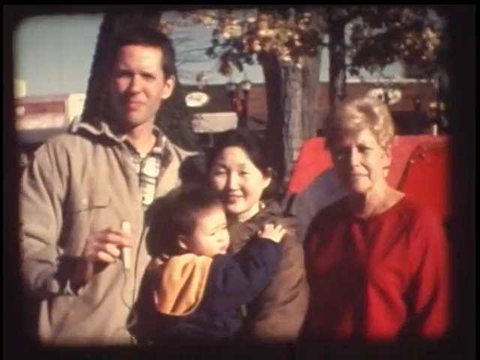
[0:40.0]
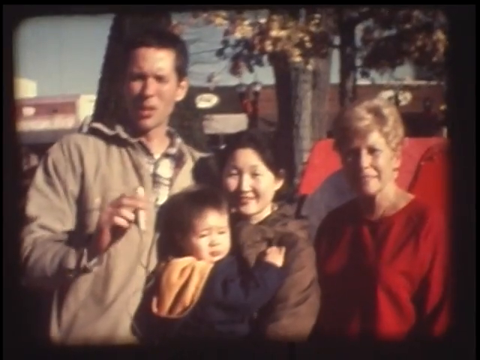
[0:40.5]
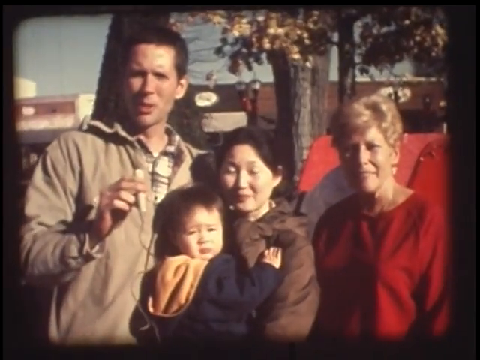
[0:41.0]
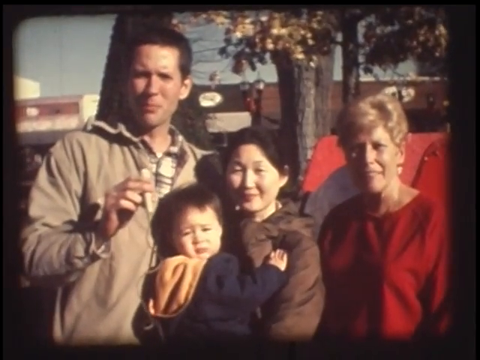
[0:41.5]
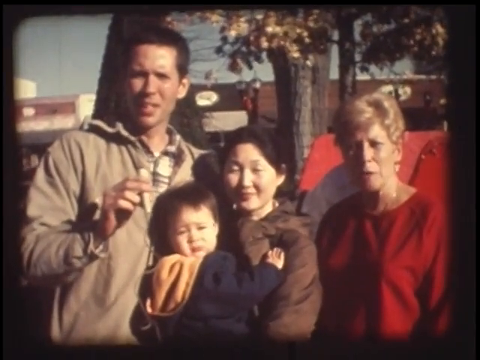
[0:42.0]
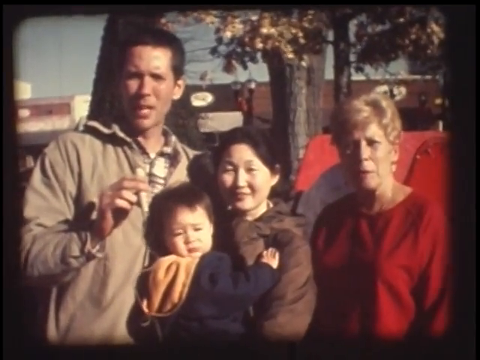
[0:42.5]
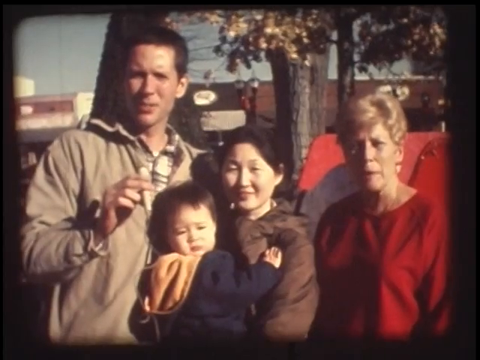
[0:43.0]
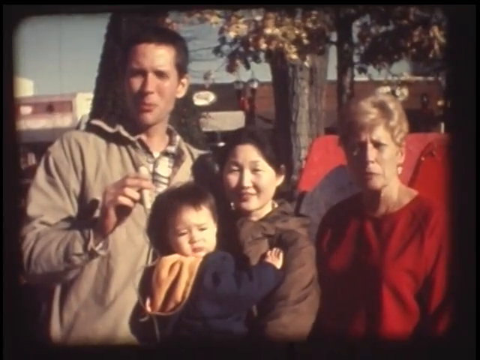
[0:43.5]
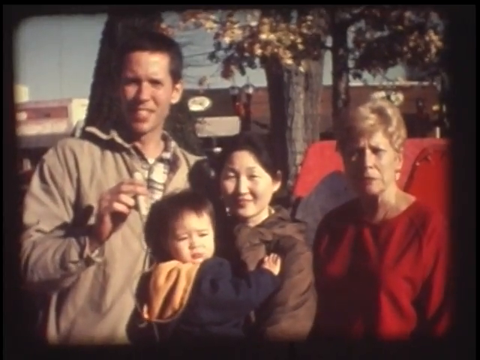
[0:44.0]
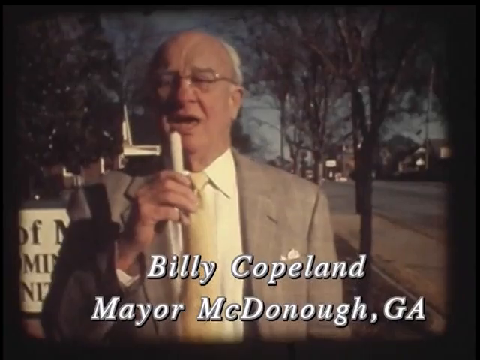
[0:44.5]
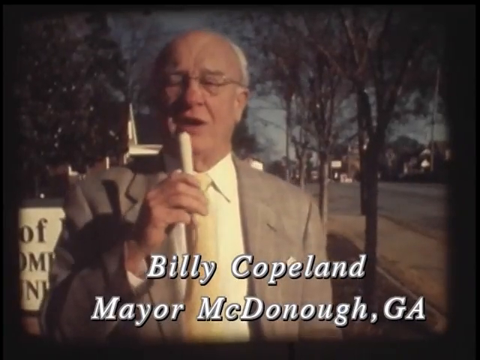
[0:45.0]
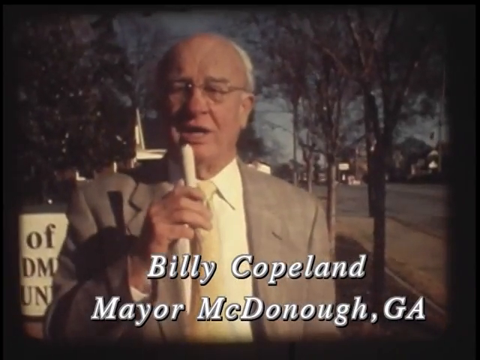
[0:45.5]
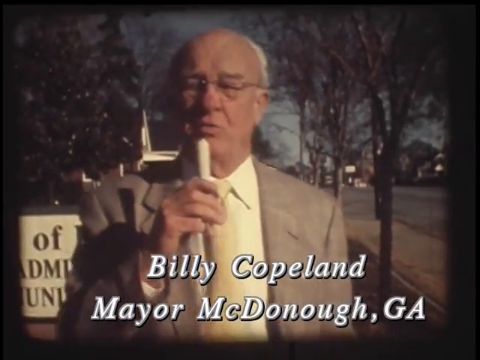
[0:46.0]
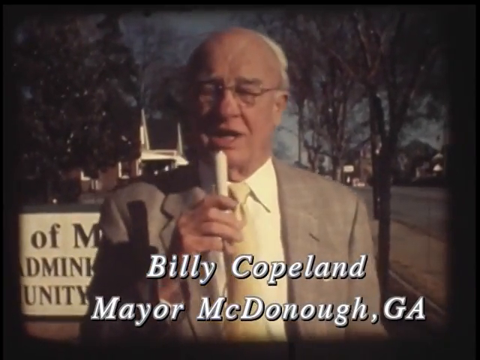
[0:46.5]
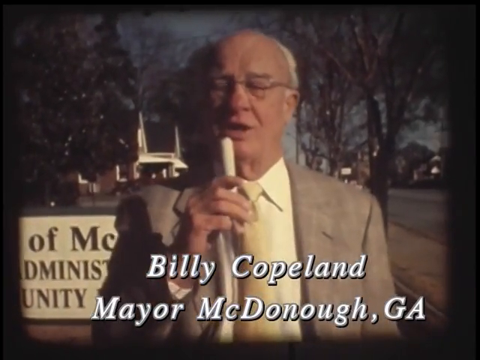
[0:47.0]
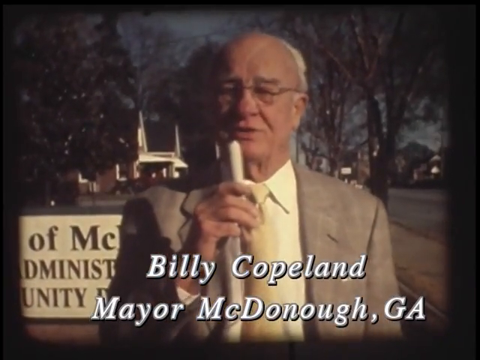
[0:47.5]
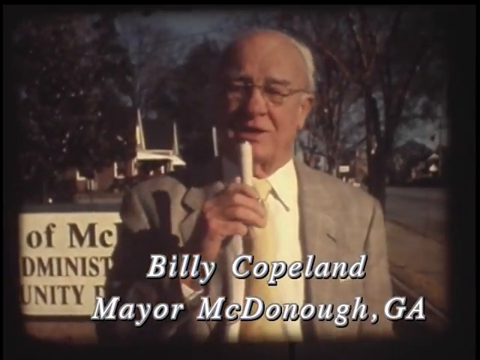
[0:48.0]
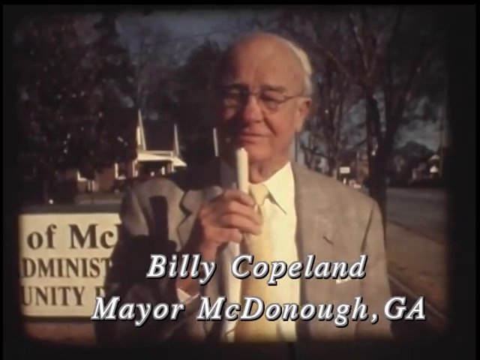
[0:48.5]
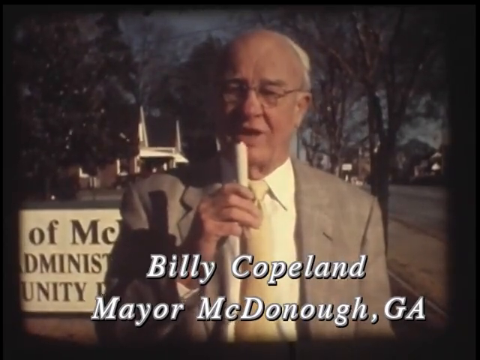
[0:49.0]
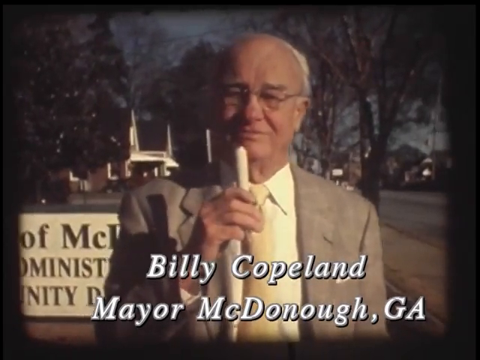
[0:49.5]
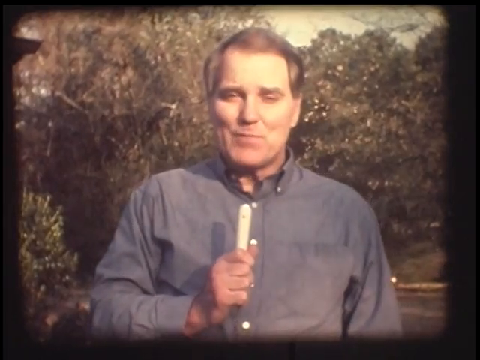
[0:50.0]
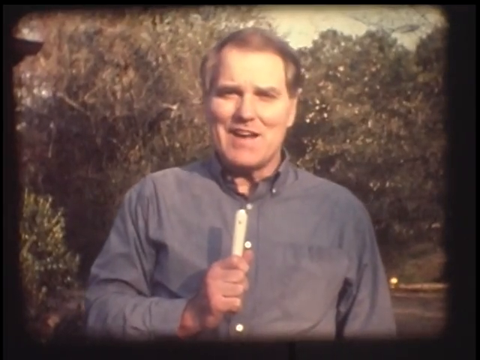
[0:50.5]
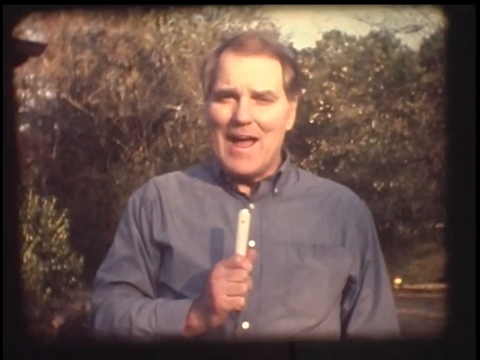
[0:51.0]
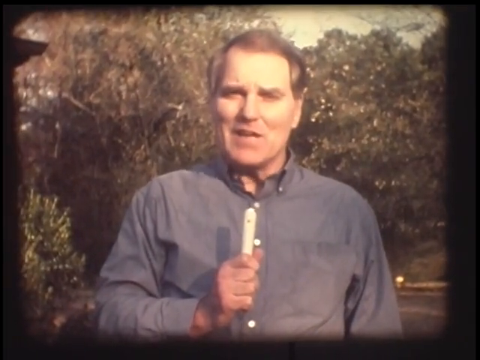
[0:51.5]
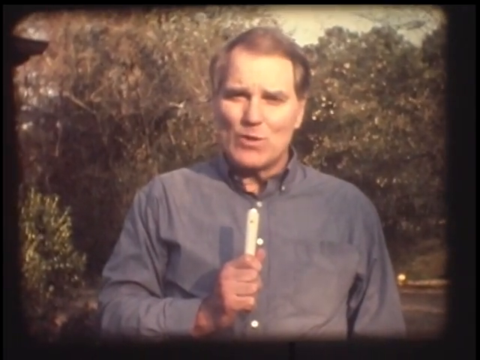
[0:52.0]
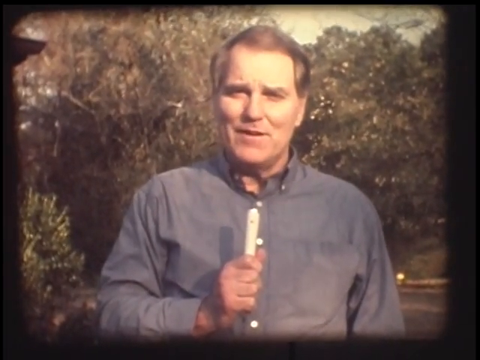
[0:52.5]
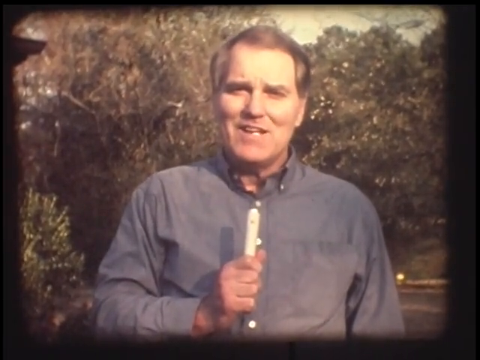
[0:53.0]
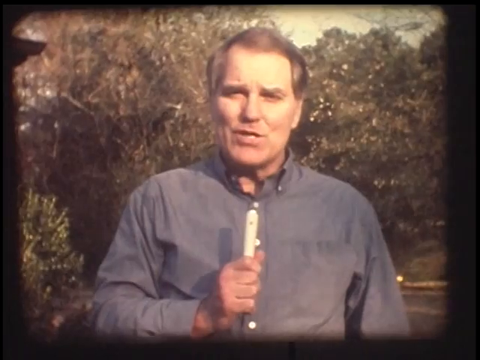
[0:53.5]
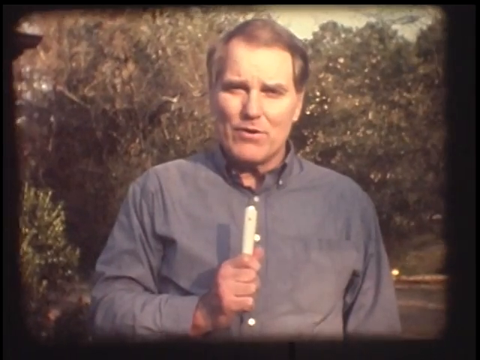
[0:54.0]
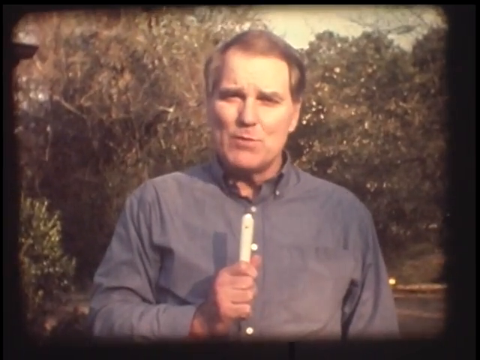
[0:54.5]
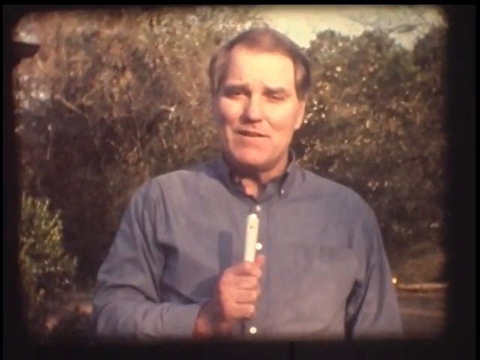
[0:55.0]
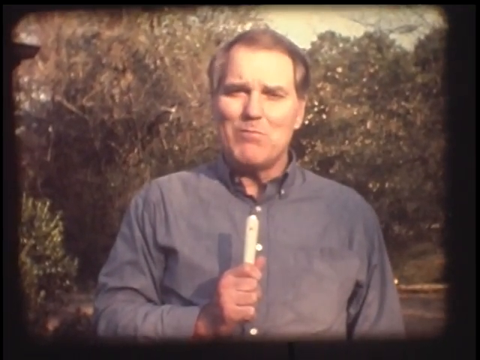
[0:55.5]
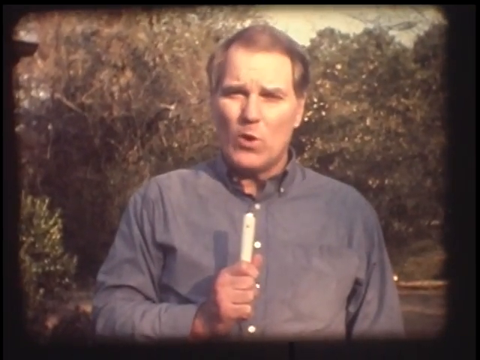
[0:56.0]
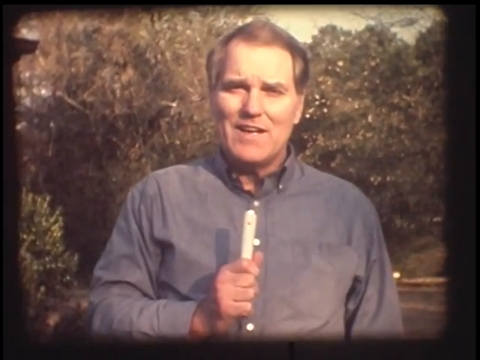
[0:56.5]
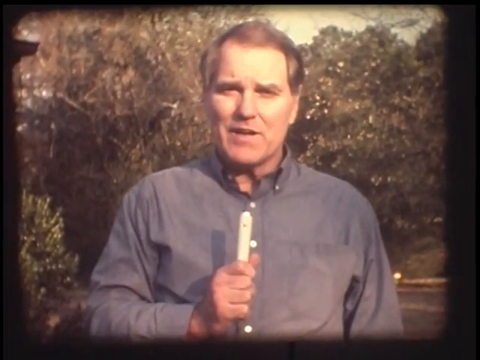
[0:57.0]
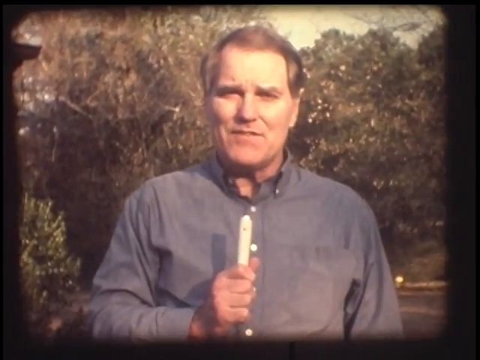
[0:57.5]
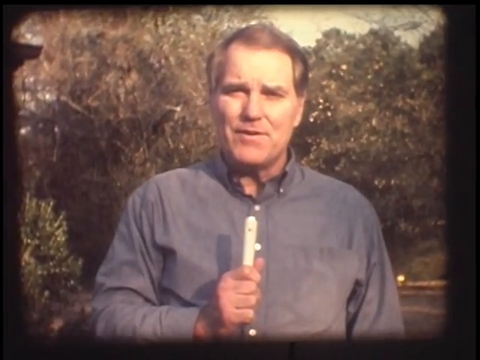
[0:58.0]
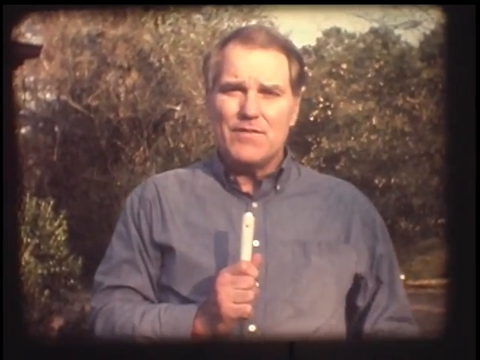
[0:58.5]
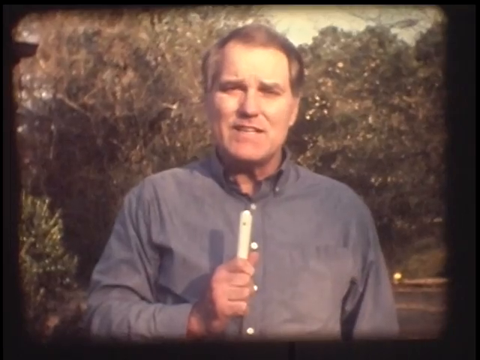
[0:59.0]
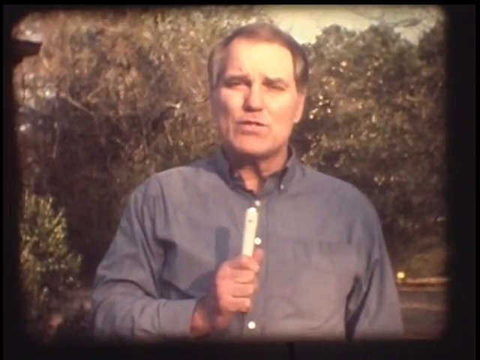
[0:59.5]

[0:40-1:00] The film is still grainy. In the center is a small Asian woman with black hair and a brown coat, facing the camera with her chest slightly turned to the left. She holds a small child wearing a blue coat with a yellow hood; his head is pressed right next to her cheek, and he is on the left side. To her right is a tall man, about a head taller than her, with dark hair and a brown coat; his arm comes down and out in front of him, holding a small white microphone right behind the child's head. On the right side is a woman in a red shirt, maybe in her 60s, with blonde hair. The building is behind them. The man on the left is talking, and the baby turns a little more toward the camera. The video cuts to a man with gray hair and glasses, wearing a tan jacket and a white shirt. There is a little sign to his left, of which only a few letters can be seen, and trees and houses are behind him. Big, bold white lettering across the bottom reads "Billy Copeland, Mayor of McDonough, Georgia". He talks into a small microphone held up near his face with his left hand. The video then cuts back to the man in the blue shirt with a microphone, now standing in front of a bunch of trees. The microphone is just below his chin as he talks; his head kind of jerks forward, slightly tilted to the right, and his mouth is pretty animated.